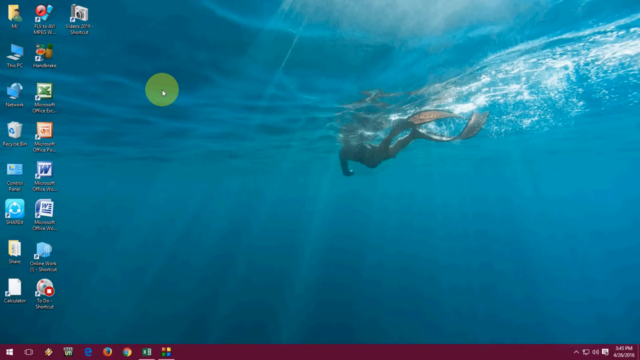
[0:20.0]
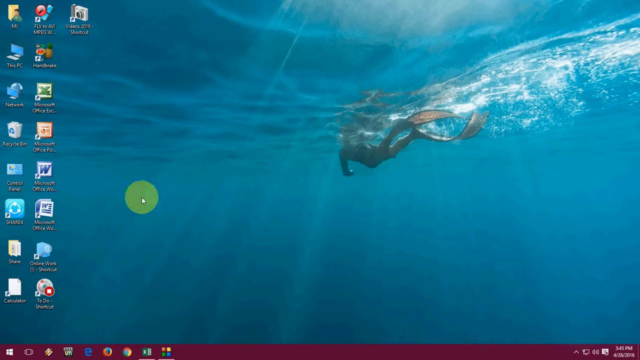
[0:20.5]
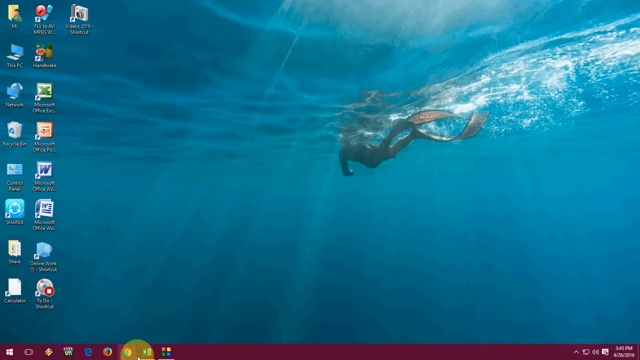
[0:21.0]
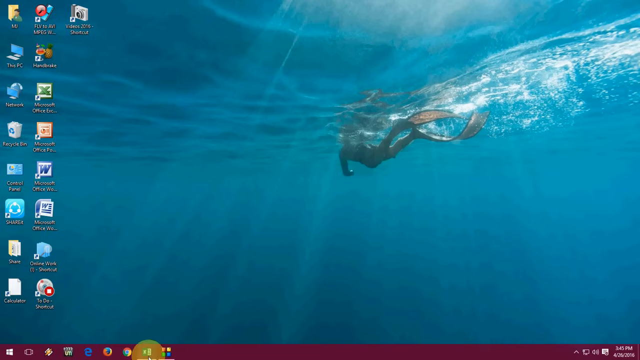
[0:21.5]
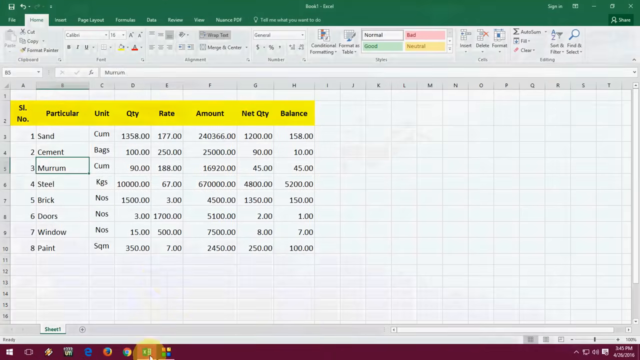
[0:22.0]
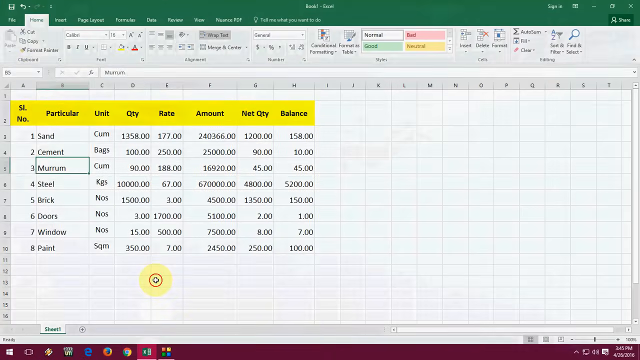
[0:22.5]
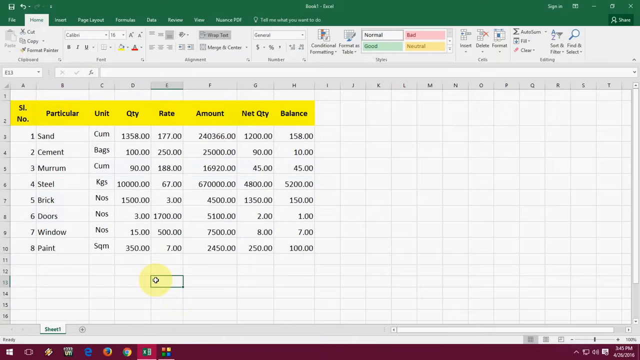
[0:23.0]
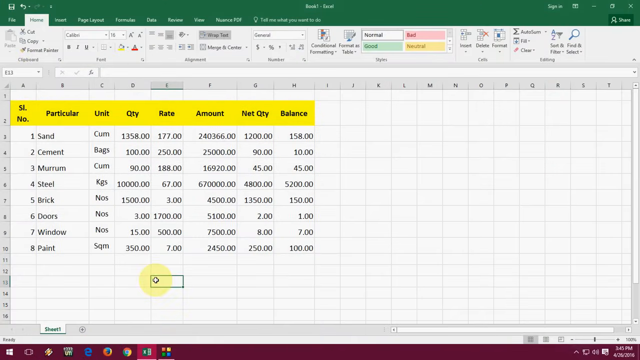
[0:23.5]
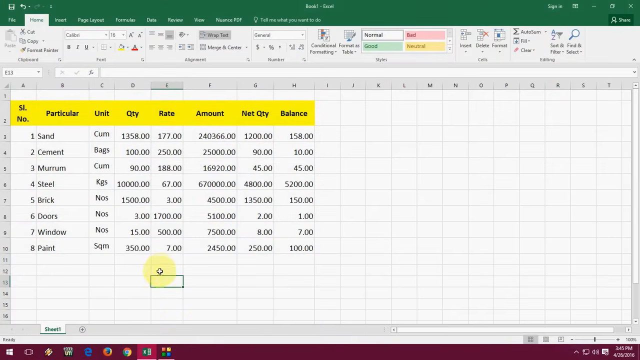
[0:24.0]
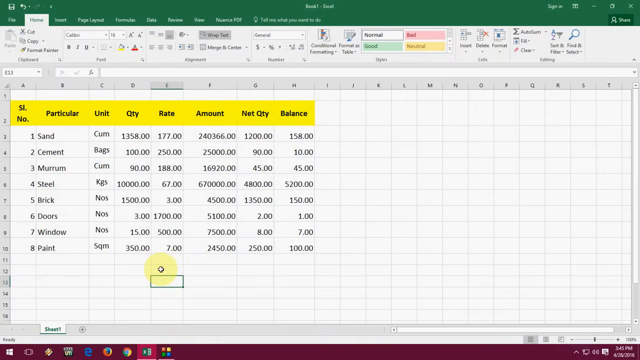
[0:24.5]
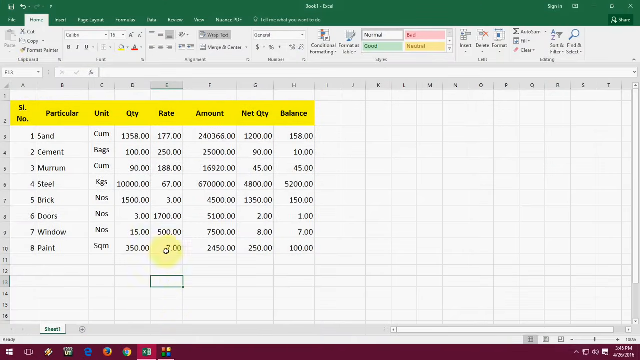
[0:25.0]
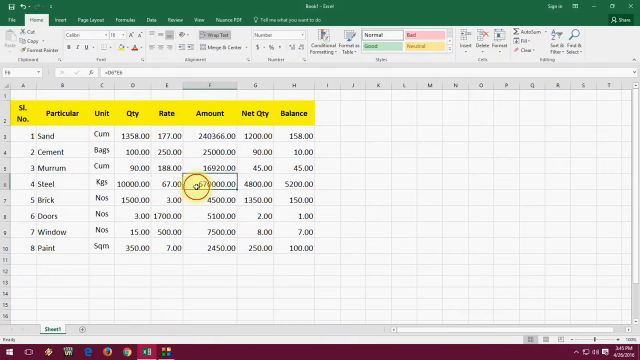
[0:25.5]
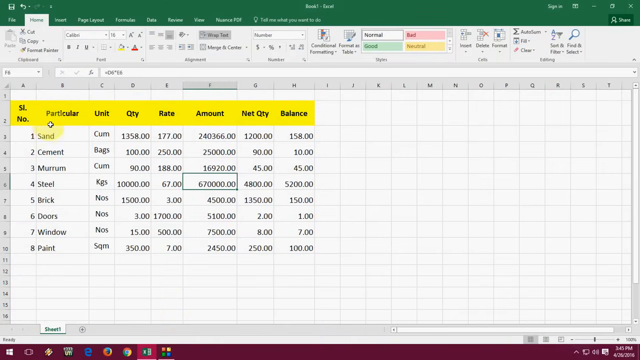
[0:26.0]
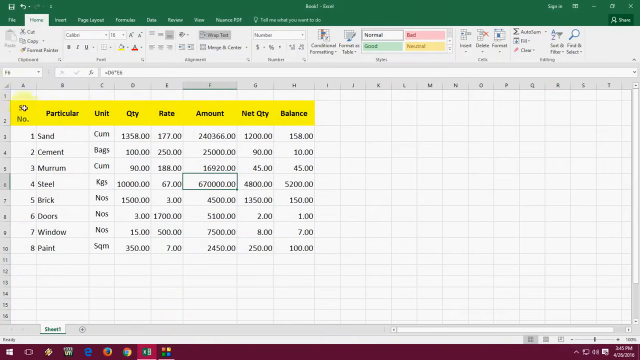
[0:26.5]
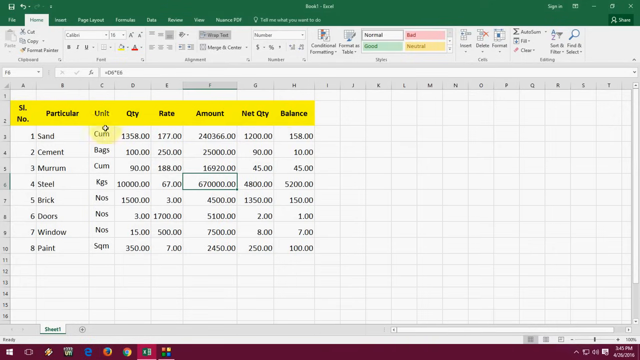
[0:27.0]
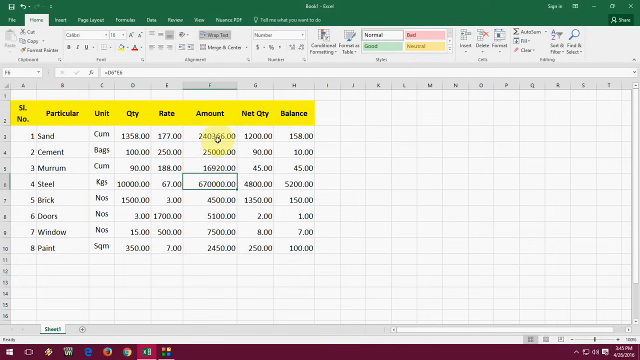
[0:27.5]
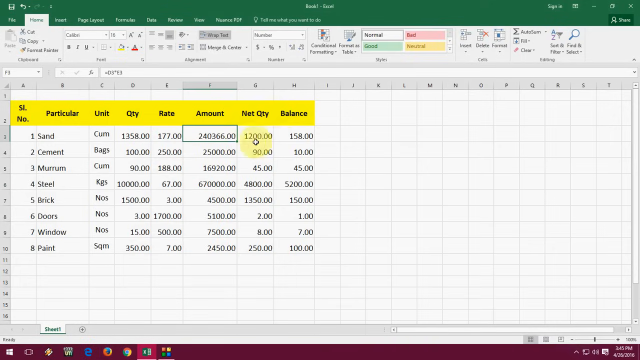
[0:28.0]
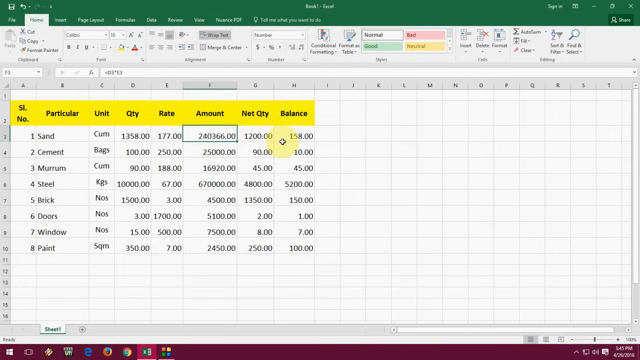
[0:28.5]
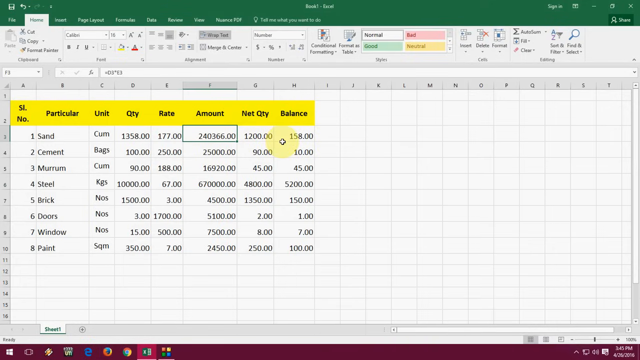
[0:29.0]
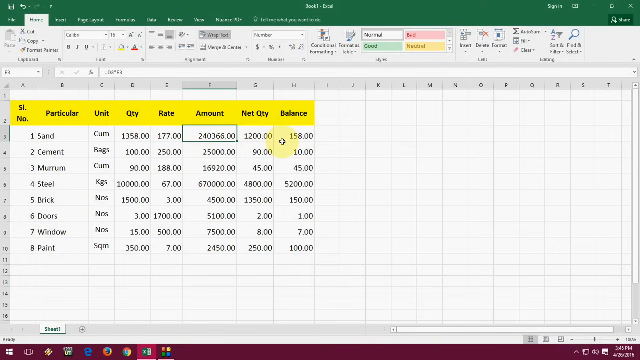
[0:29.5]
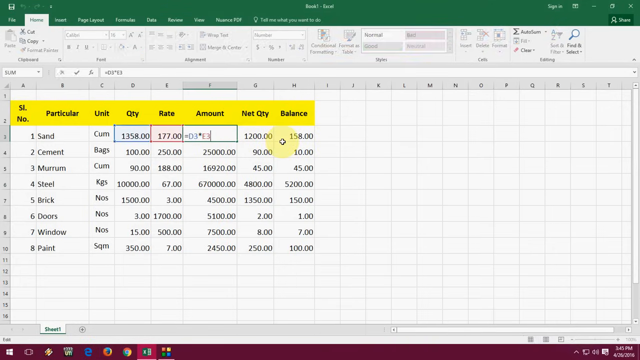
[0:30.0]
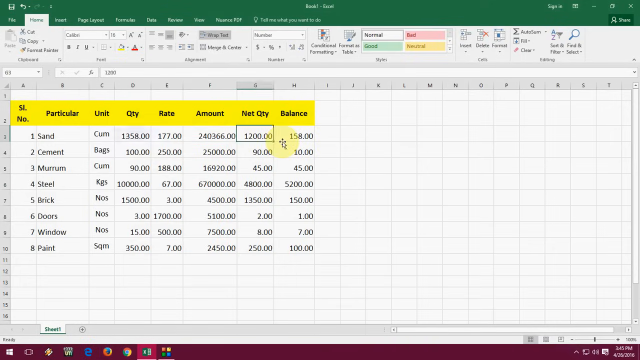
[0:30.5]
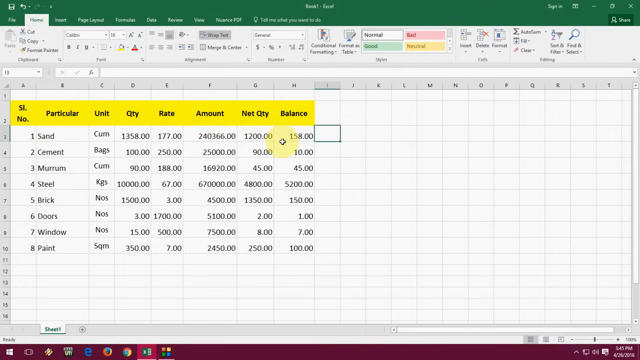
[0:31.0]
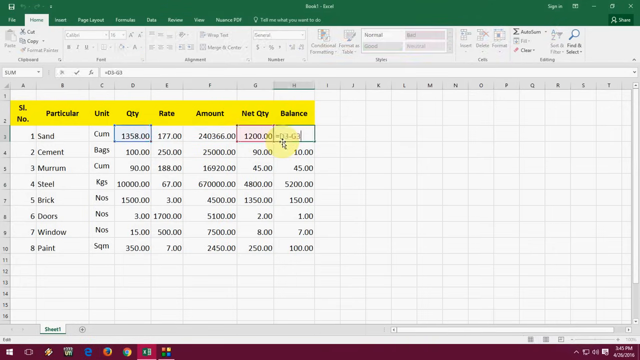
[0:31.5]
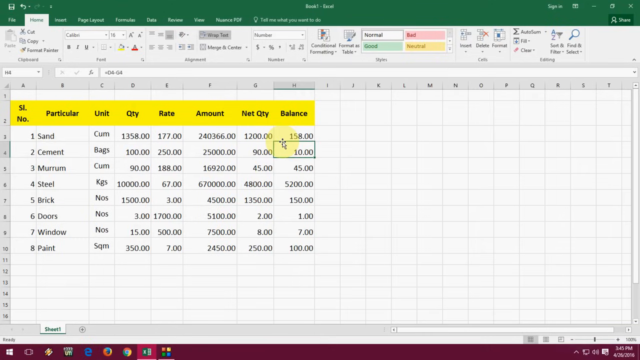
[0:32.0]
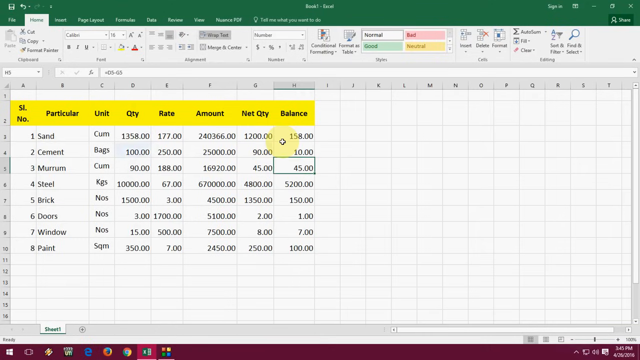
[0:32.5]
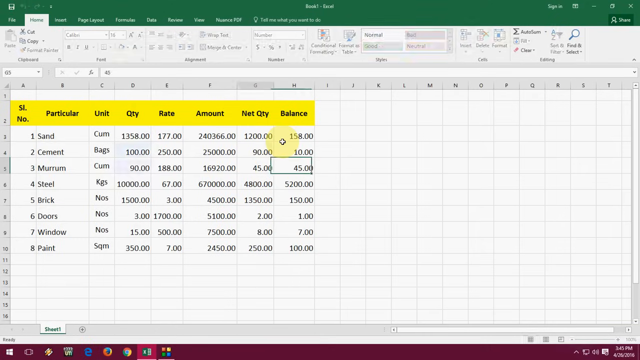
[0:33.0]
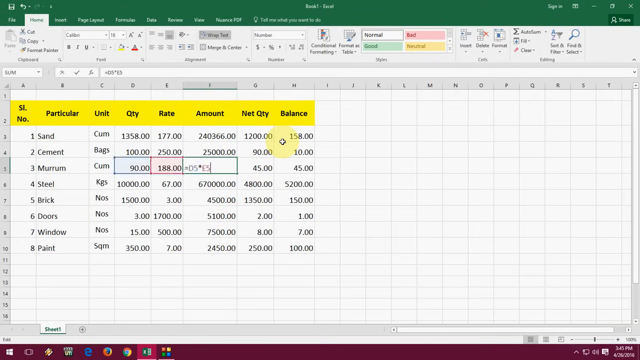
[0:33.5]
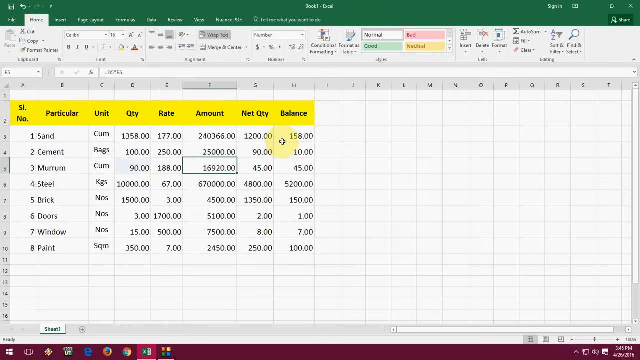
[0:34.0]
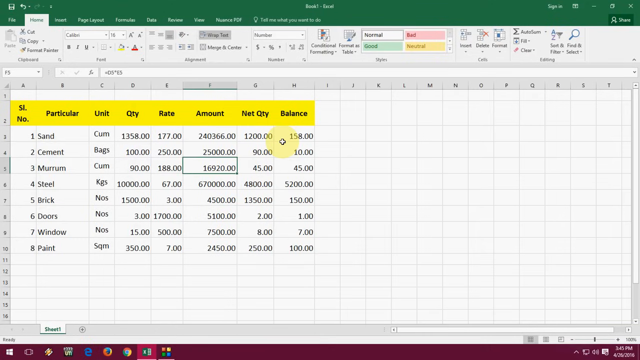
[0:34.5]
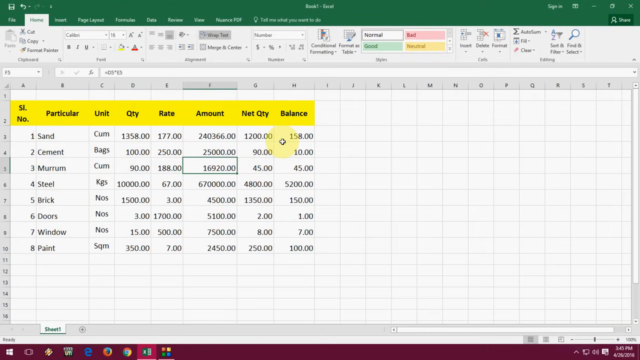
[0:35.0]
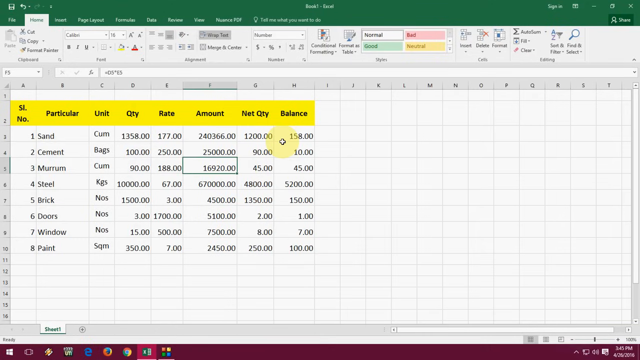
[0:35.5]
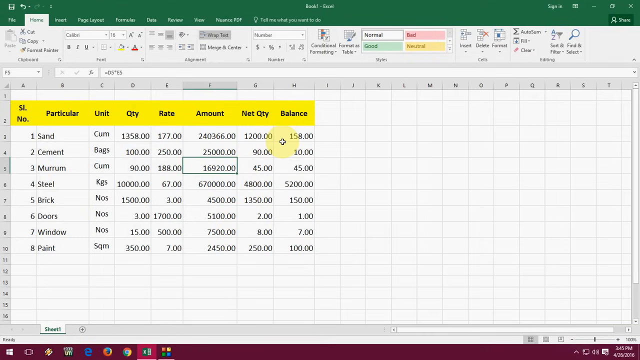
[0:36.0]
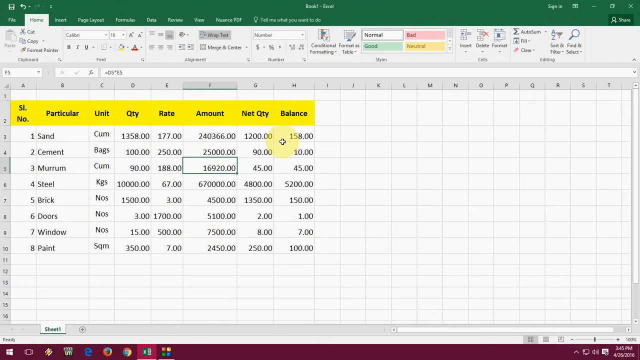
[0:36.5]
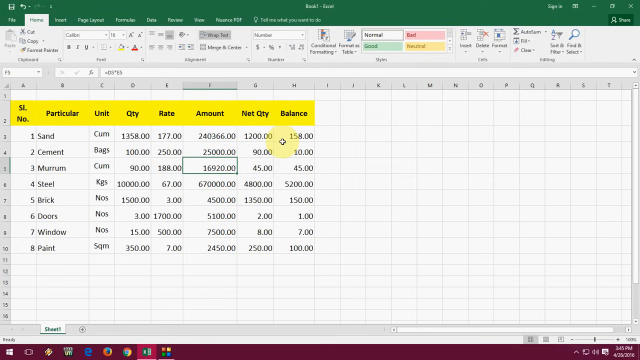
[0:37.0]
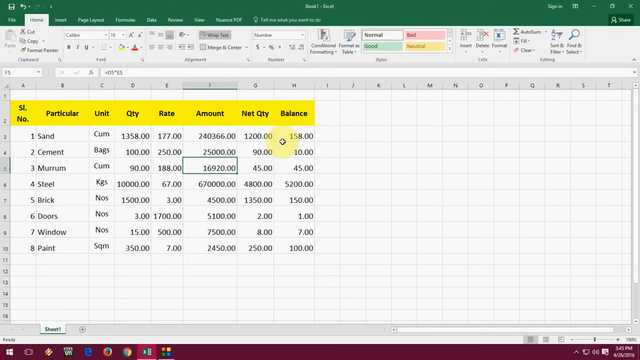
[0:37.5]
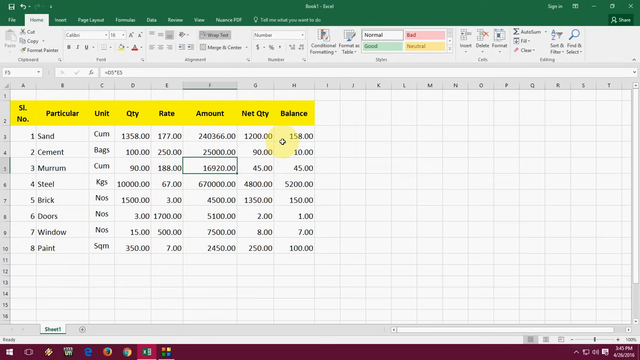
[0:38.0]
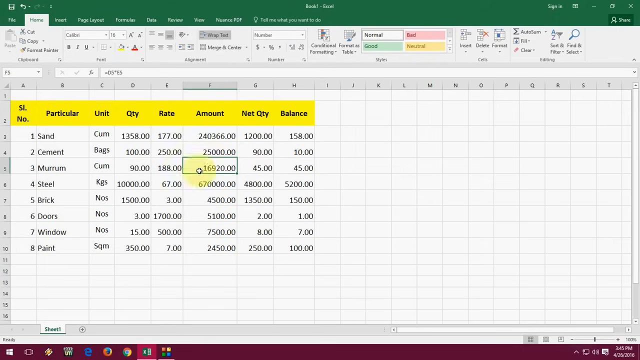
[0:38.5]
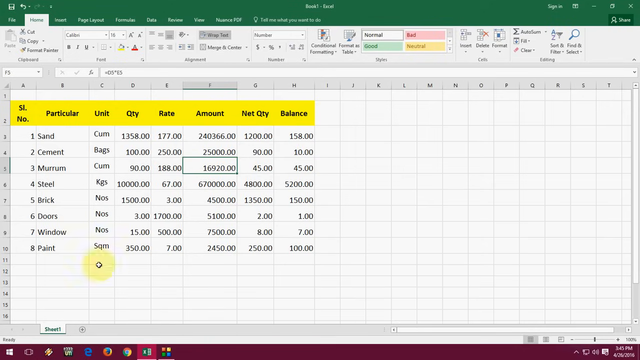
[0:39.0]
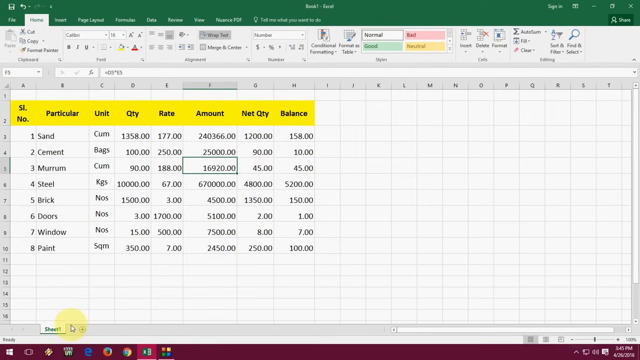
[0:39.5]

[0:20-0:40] The desktop remains on screen. The background looks like a swimmer in the ocean, with the water very clear and blue. The swimmer has fins on their feet and looks like they are wearing a scuba outfit. Near the top left corner of the screen is a green circle with the mouse pointer in it. Icons are in the top left corner, arranged in two rows that run vertically down to the bottom of the screen, plus a third row with only one icon at the top. The top-left icon's label apparently reads "MU," but it is blurry and hard to make out; it shows a folder with a cartoonish-looking person next to it. Below that is "This PC," with a picture of a keyboard and a monitor. Next is "Network," with a computer monitor and a globe behind it. Below that is a trash can with a blue recycle symbol on it; the can is gray or white and has trash in it. Next is a control panel icon with some kind of rectangular chart. Below that is an unreadable label on a blue square icon with a white circle in it and three dots on the circle. Then comes another file folder with files in it, and below that an icon for calculator that is blank, just white.